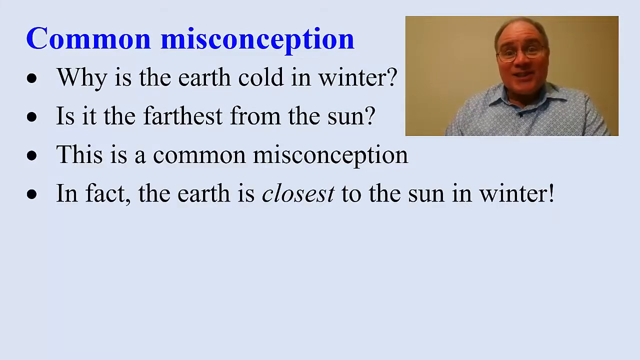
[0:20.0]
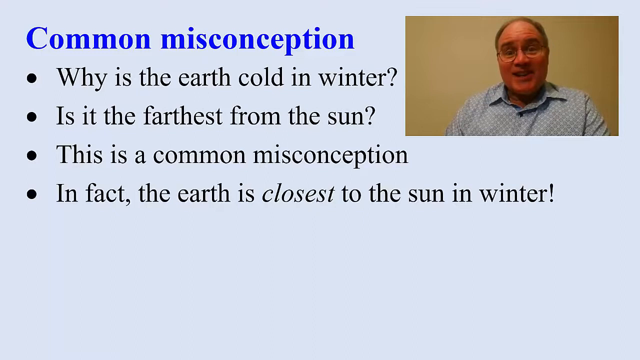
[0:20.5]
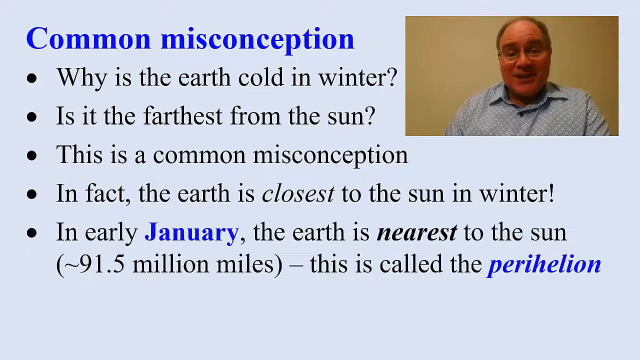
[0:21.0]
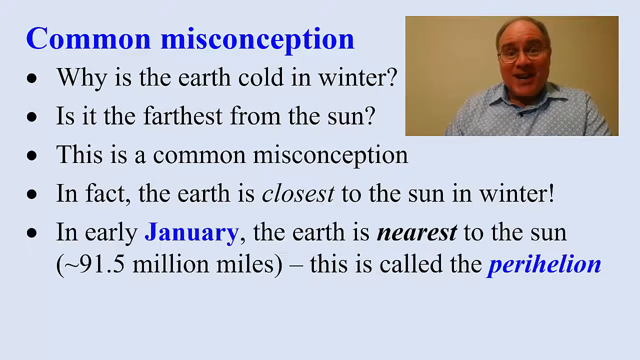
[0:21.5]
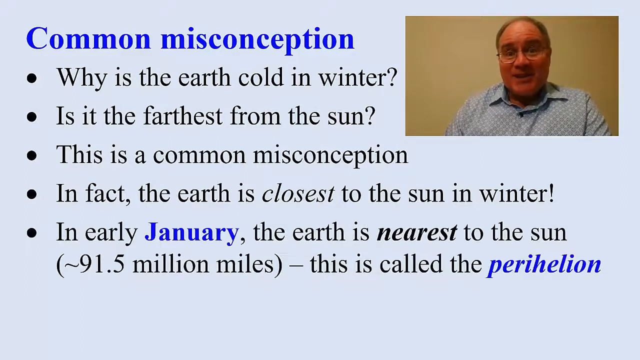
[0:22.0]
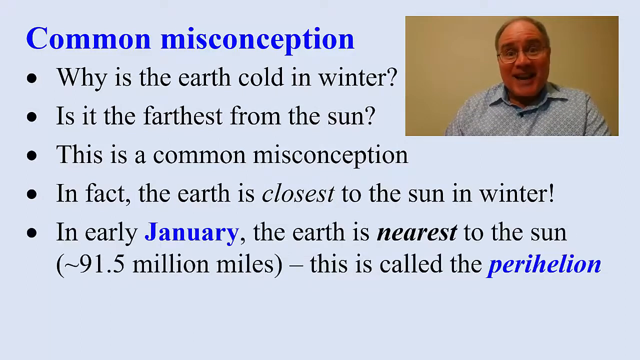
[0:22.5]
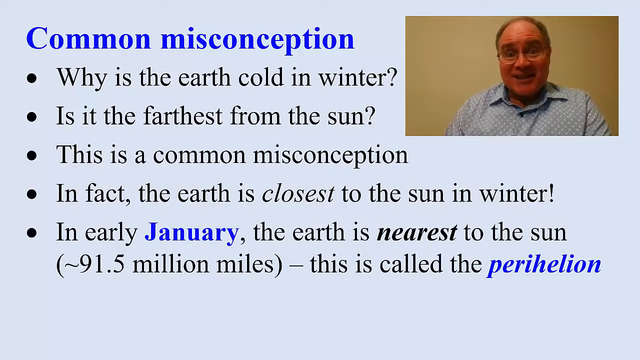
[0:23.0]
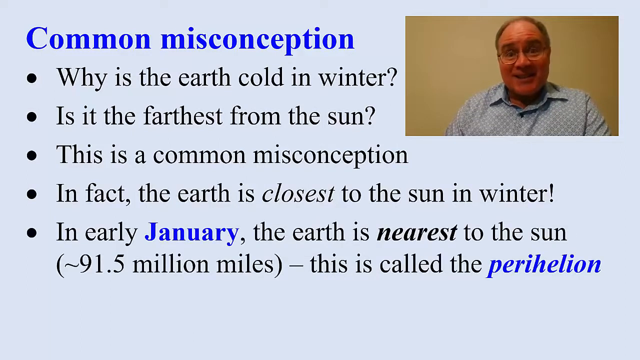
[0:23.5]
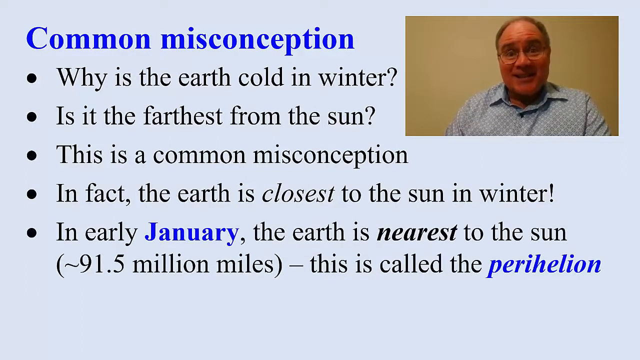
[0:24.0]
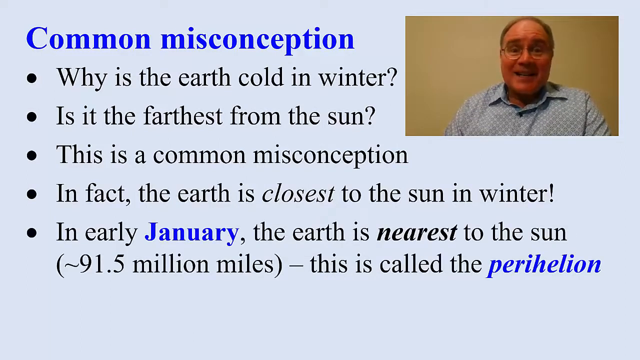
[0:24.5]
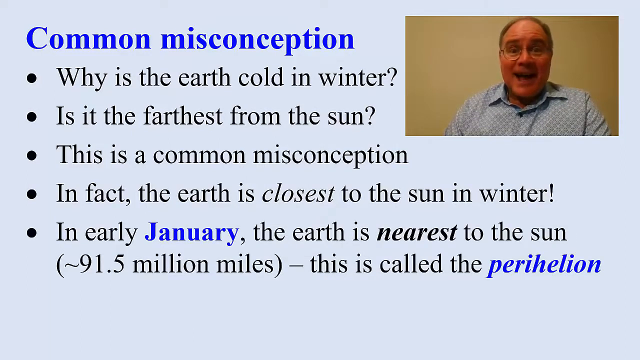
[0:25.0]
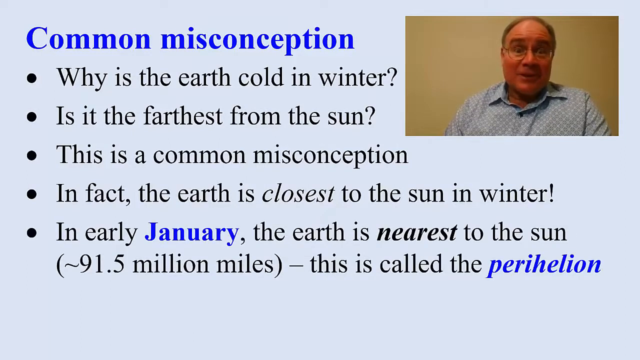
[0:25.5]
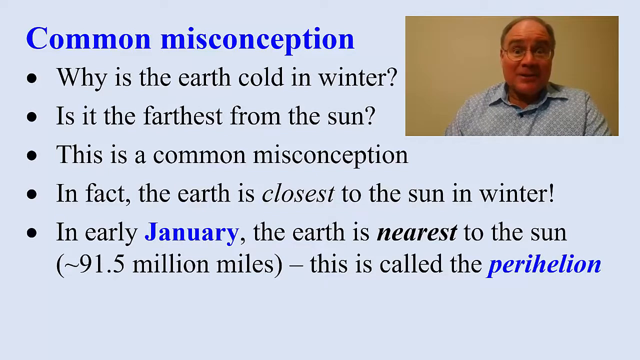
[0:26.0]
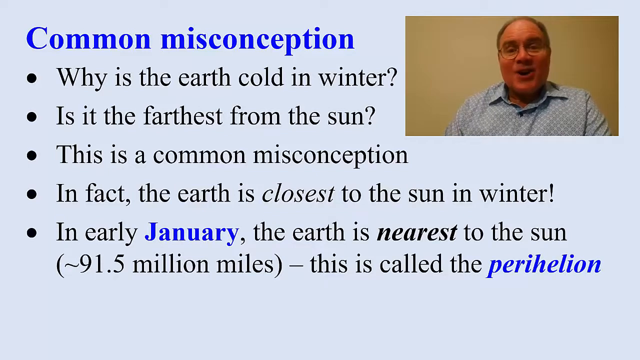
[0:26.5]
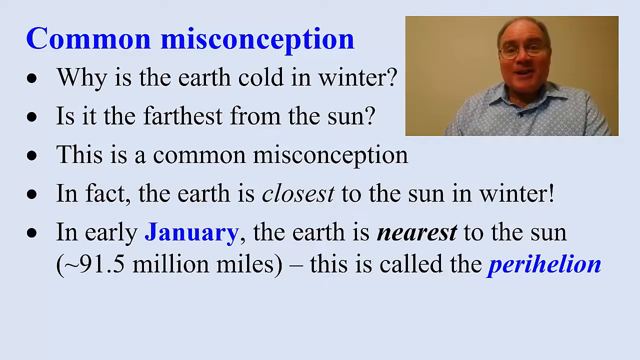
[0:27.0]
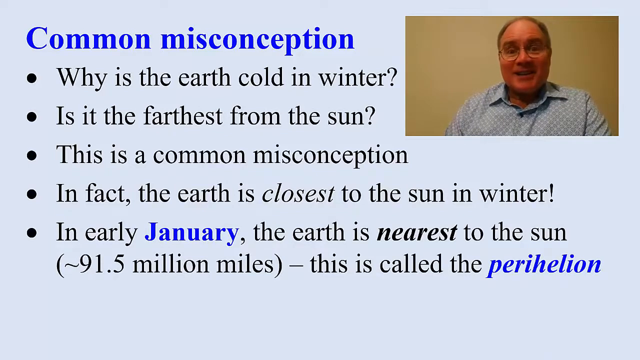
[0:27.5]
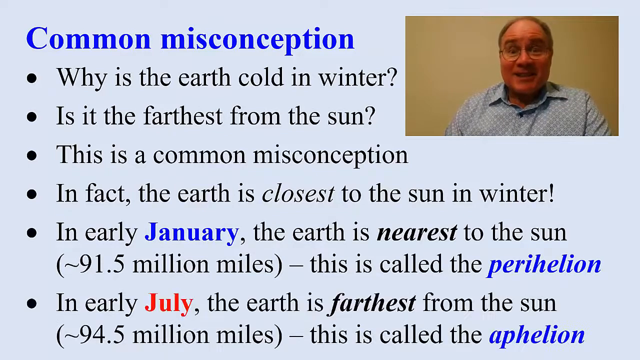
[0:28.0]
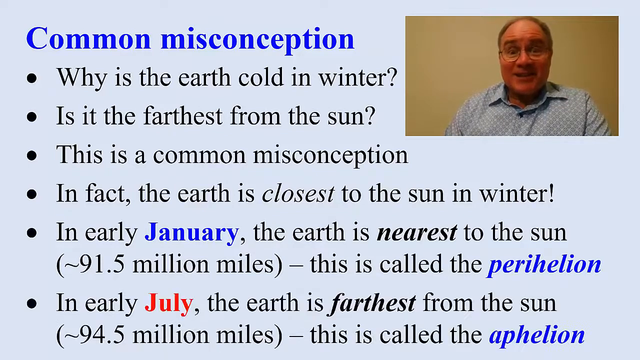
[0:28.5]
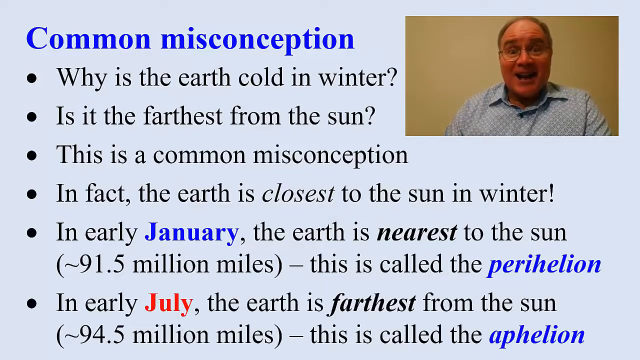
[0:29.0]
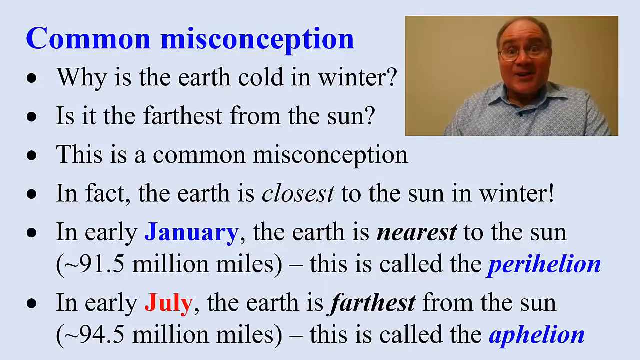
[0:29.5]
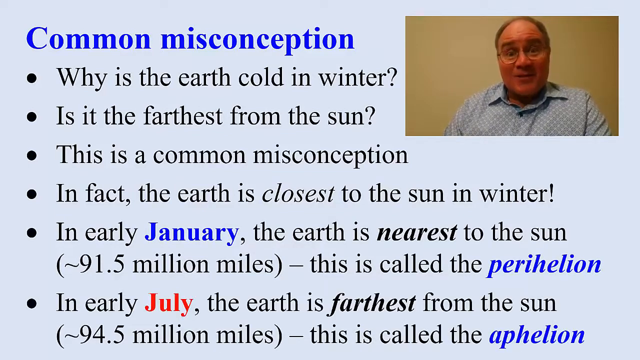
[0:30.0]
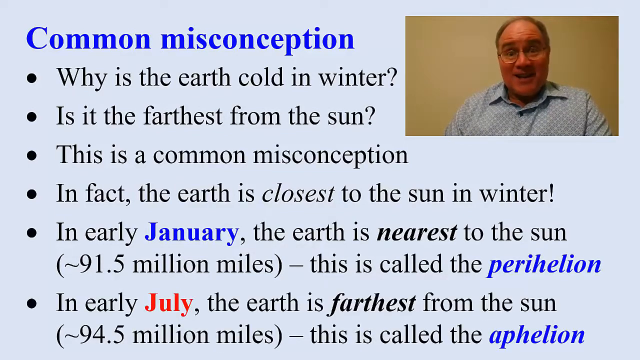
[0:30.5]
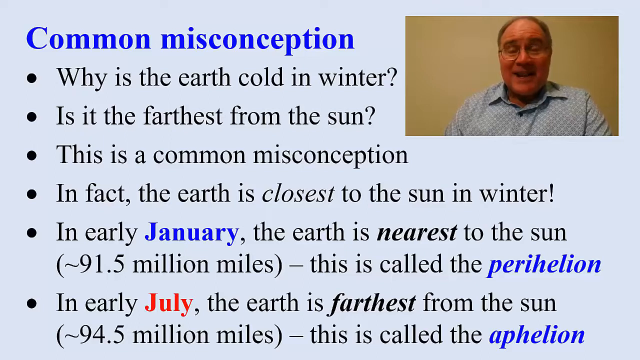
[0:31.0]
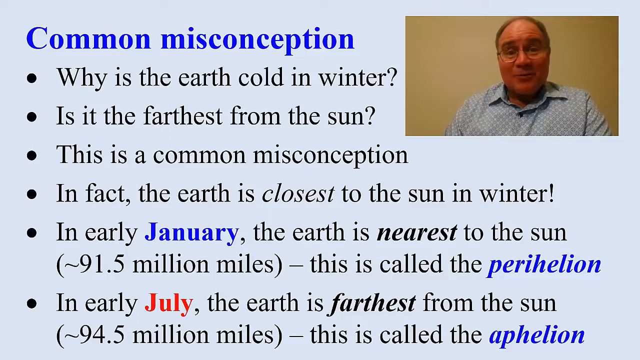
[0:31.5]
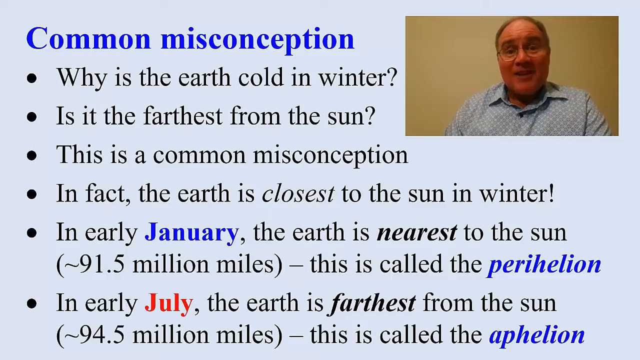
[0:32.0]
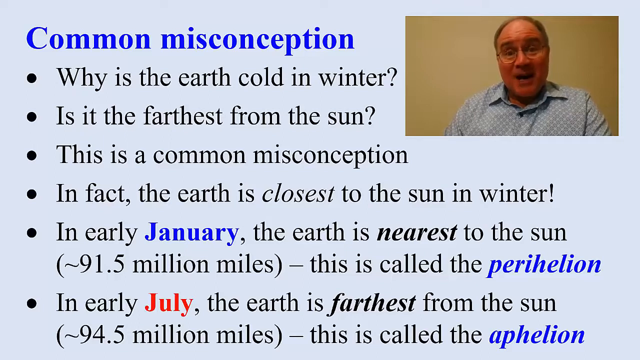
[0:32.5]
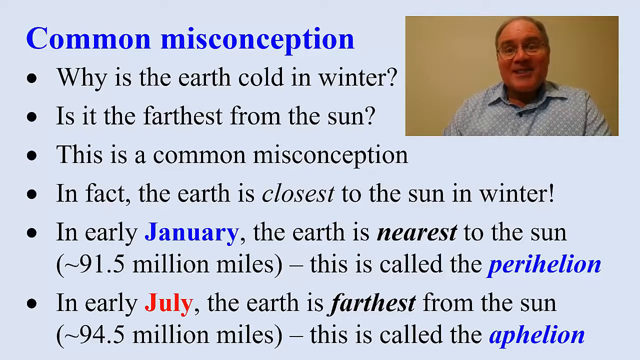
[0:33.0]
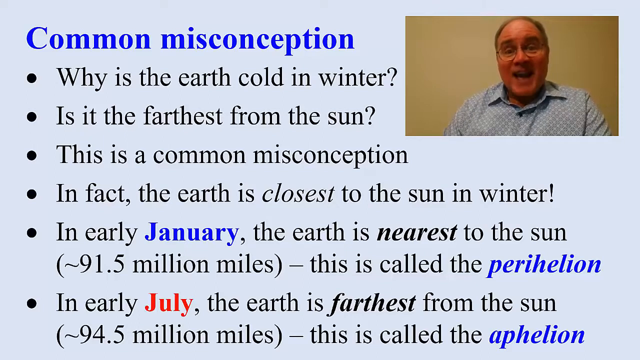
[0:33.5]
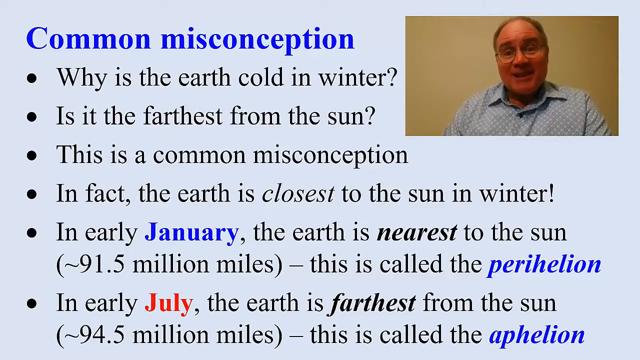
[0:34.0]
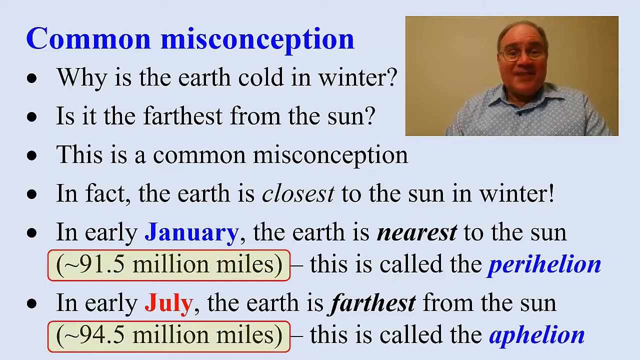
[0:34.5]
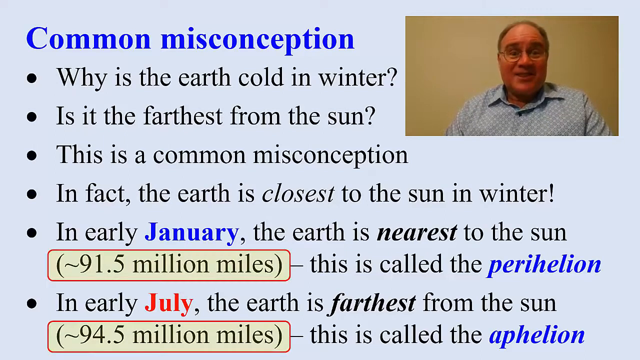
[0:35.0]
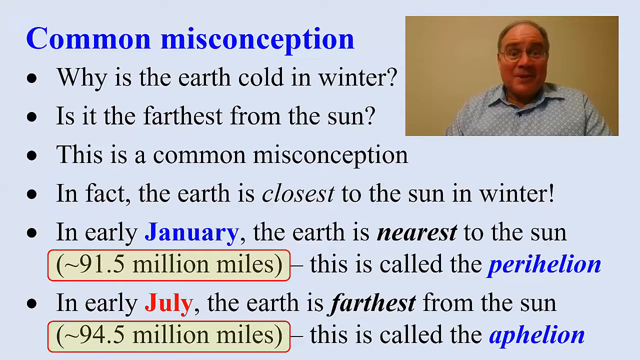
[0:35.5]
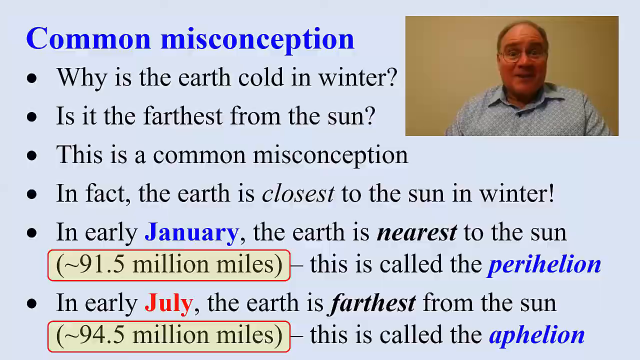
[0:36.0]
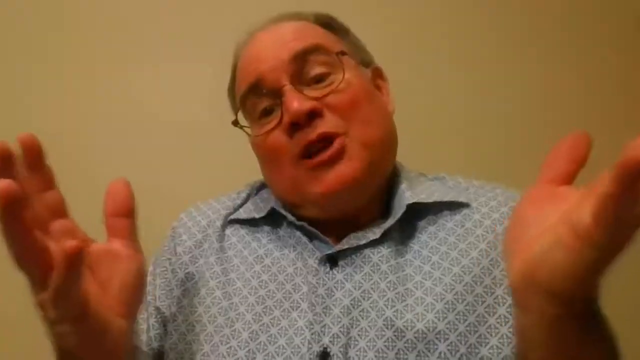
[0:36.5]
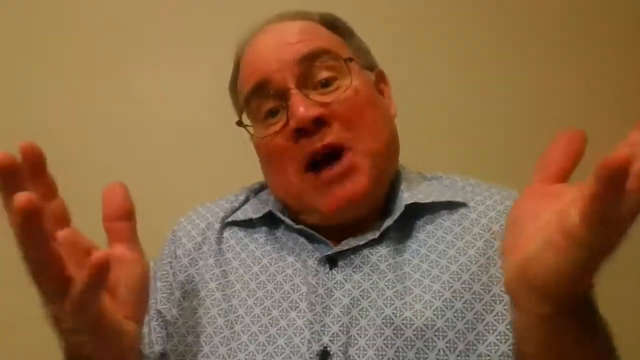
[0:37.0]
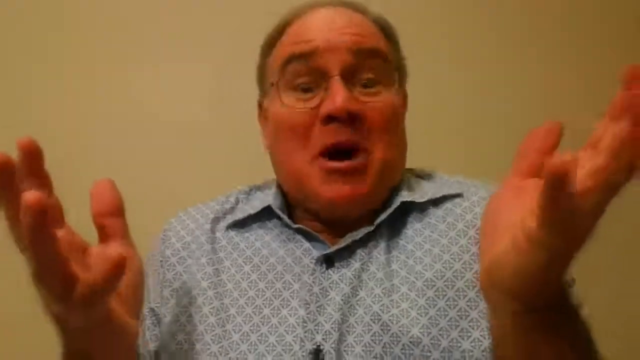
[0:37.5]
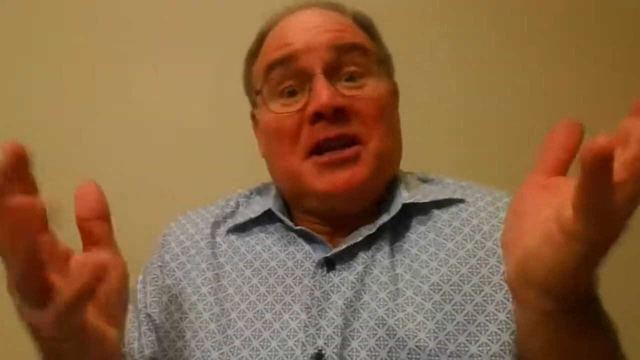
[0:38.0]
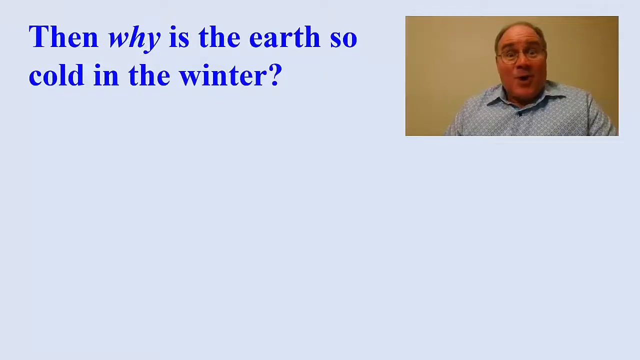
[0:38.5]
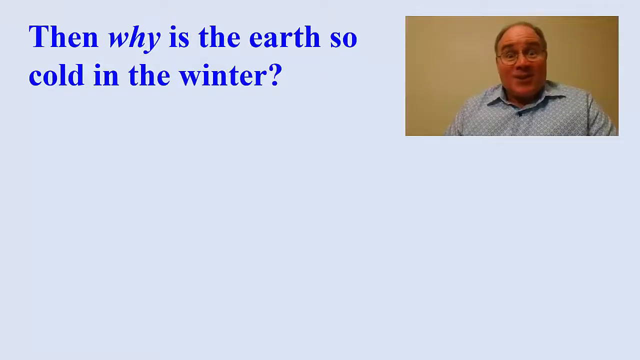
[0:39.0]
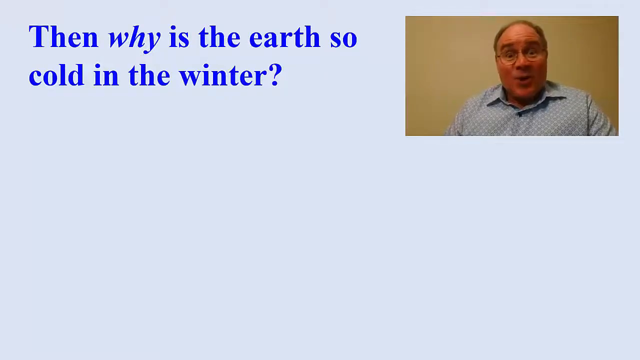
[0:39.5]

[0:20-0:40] The words "common misconceptions" are written in blue in the upper left corner. Beneath them appear bullet points: "why is the earth cold in winter", "is it the farthest from the sun", "this is a common misconception", and "in fact the earth is closest to the sun in winter". Meanwhile, John M. Cimbala is in the picture-in-picture box in the upper right corner. Text then shows that in early January the earth is nearest to the sun, "91.5 million miles", and "This is called the perihelion". John talks in the upper right corner, moving his head slightly from side to side and smiling as he speaks. Suddenly he raises his hands up towards his face, in front of him but spread out past his face, with his palms facing in and up, to emphasize the words he is saying.